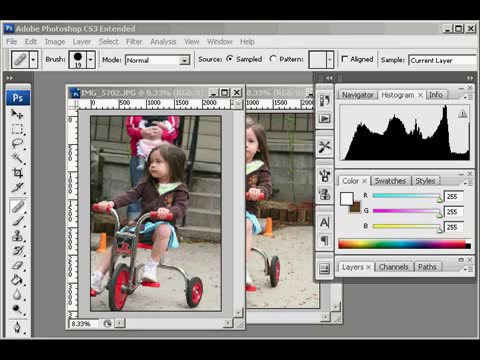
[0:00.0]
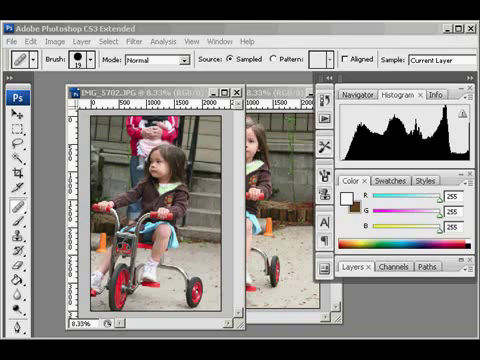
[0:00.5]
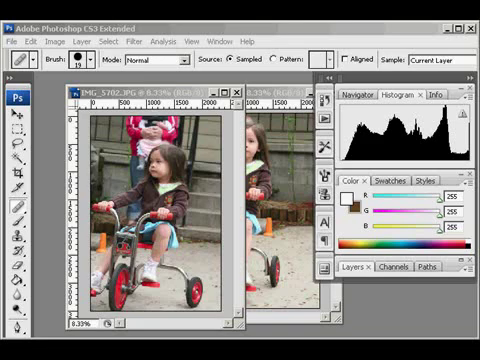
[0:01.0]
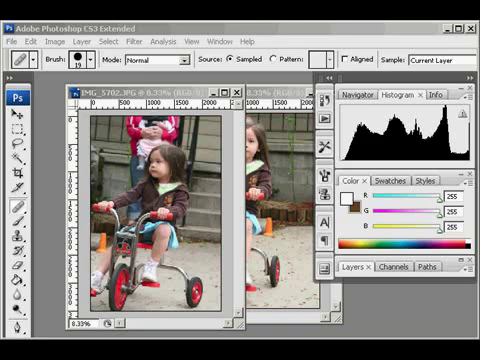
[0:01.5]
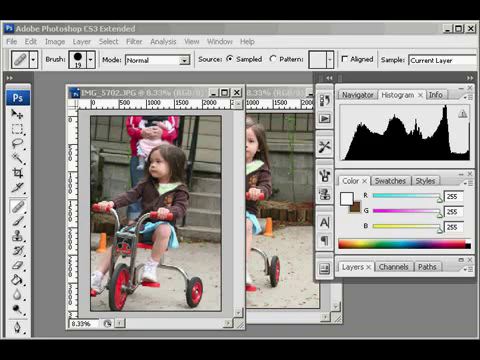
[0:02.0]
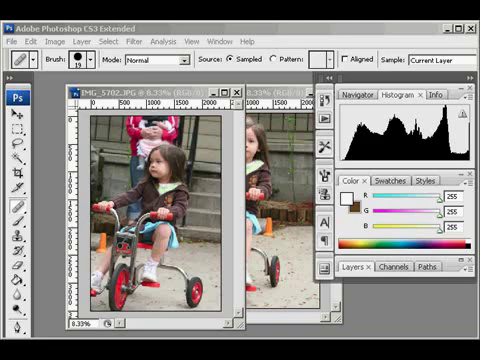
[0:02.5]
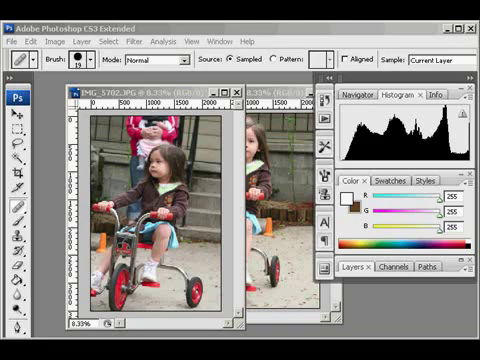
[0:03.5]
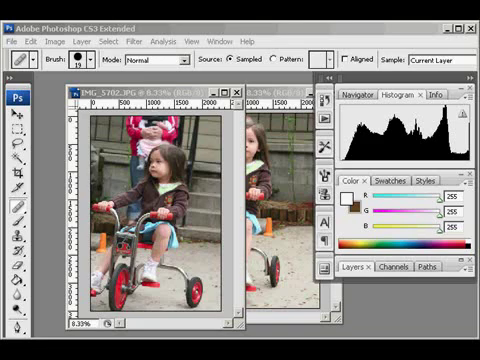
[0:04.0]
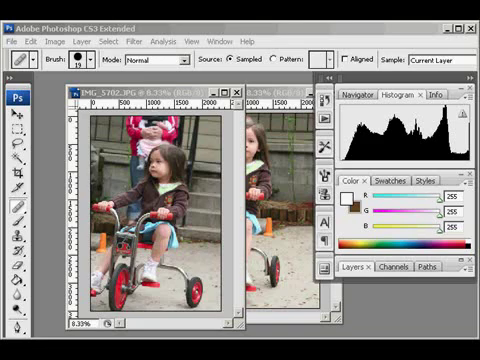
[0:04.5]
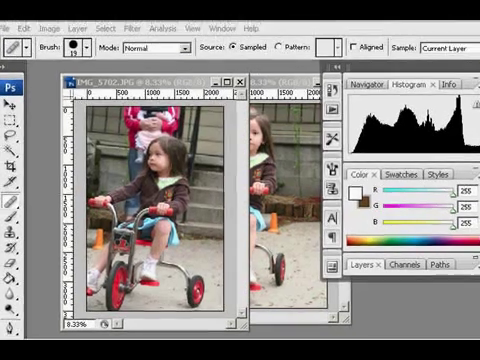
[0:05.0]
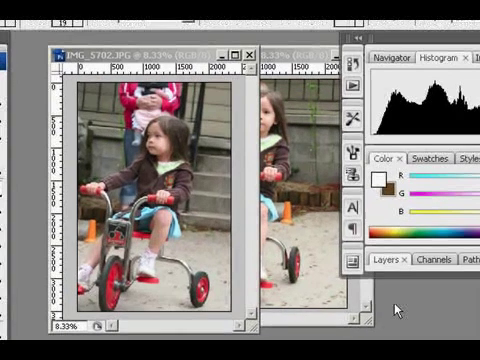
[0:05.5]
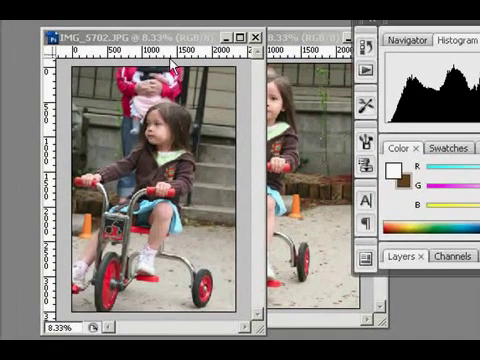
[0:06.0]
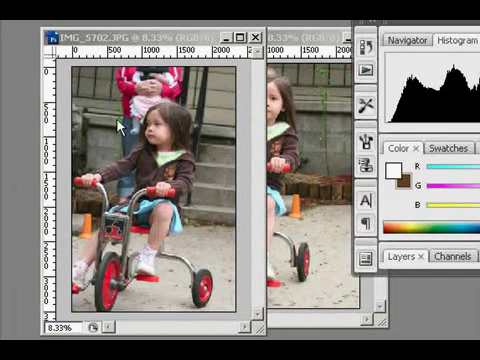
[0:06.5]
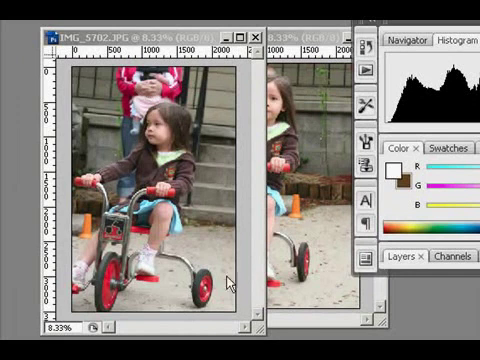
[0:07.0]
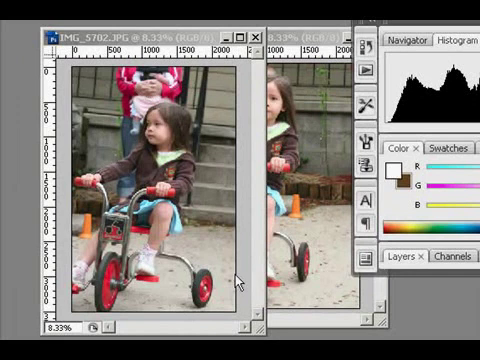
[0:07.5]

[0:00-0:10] Photo editing is being done in Adobe Photoshop CS3 Extended. On screen are two closely related photos of a young girl, probably about three or four years old, sitting on a small tricycle and pedalling it with her feet. She wears a brown jacket, a light blue jumper, a blue skirt and white sneakers. The tricycle has red handlebar grips and red wheels. Standing behind the girl is a woman carrying a baby on her chest; she wears blue jeans and a pink jacket. The view zooms in on the screen, and a mouse is being used.